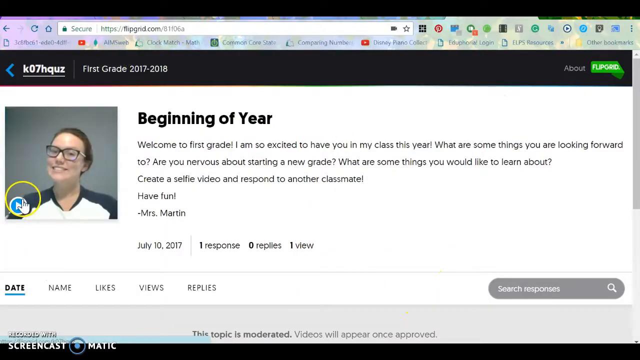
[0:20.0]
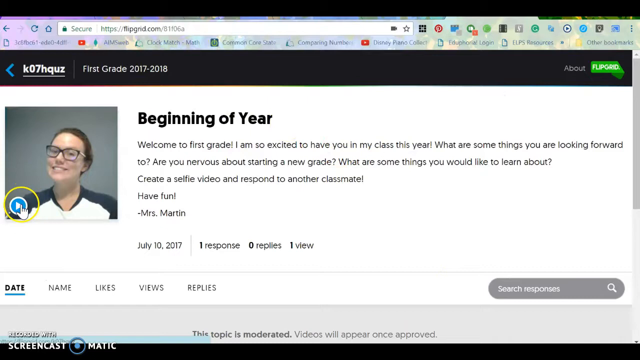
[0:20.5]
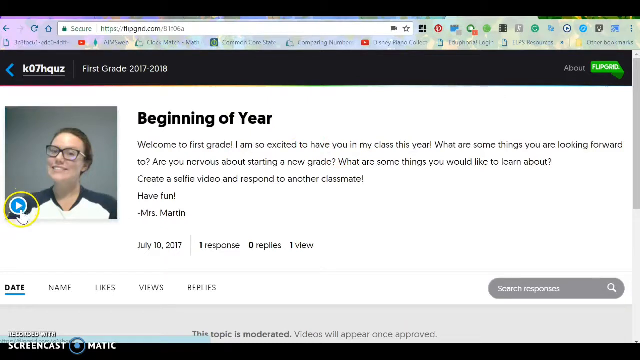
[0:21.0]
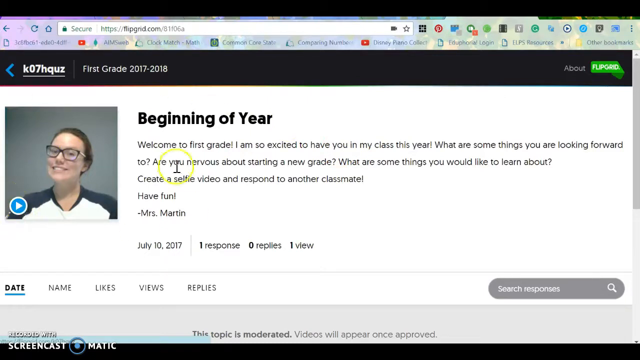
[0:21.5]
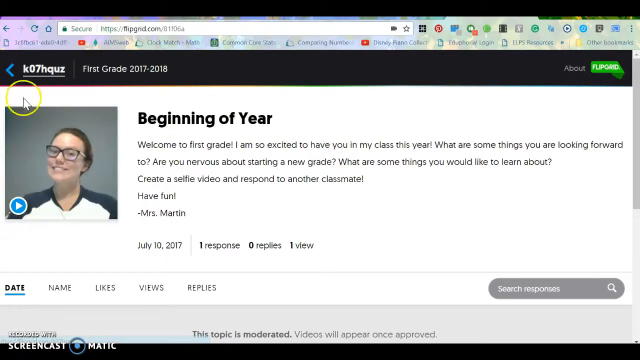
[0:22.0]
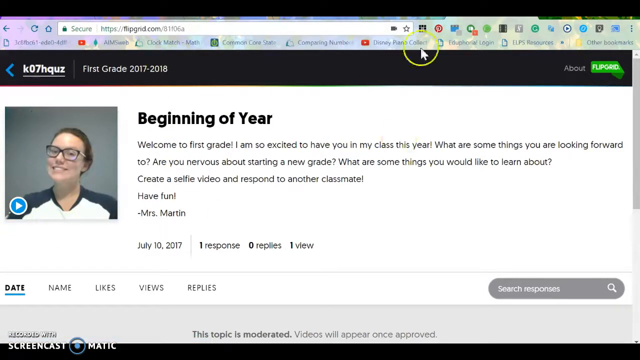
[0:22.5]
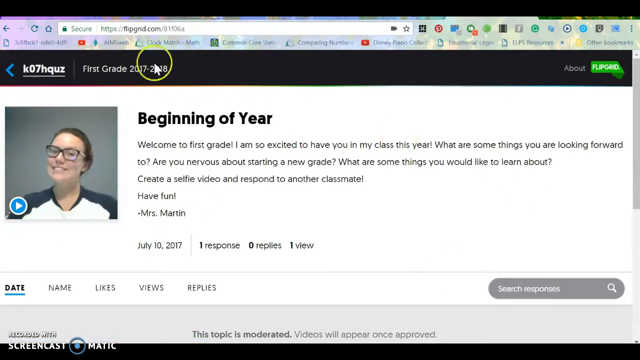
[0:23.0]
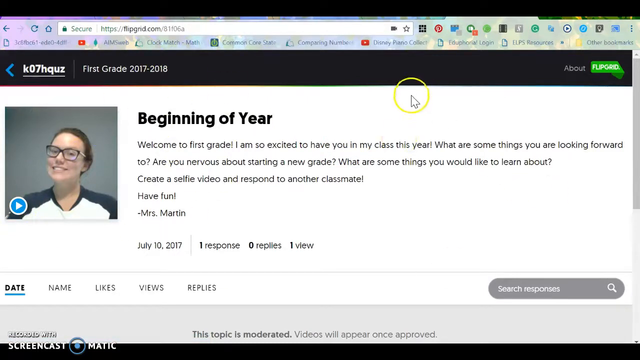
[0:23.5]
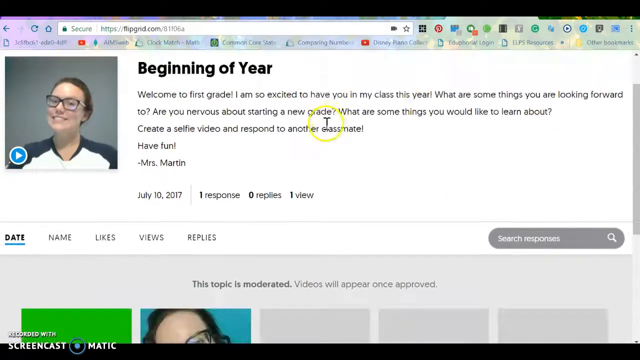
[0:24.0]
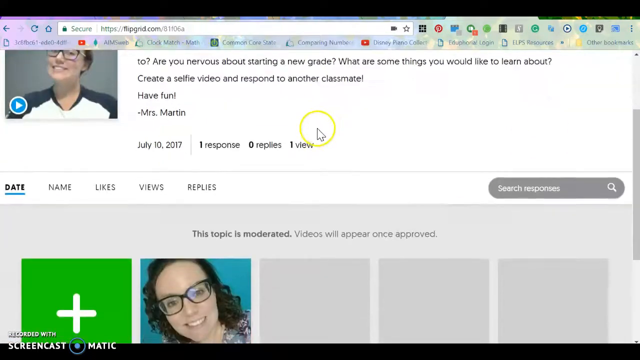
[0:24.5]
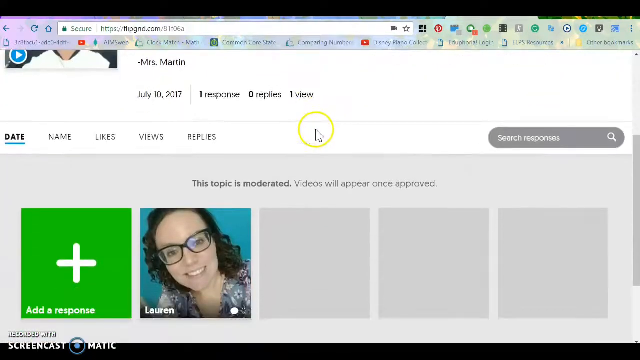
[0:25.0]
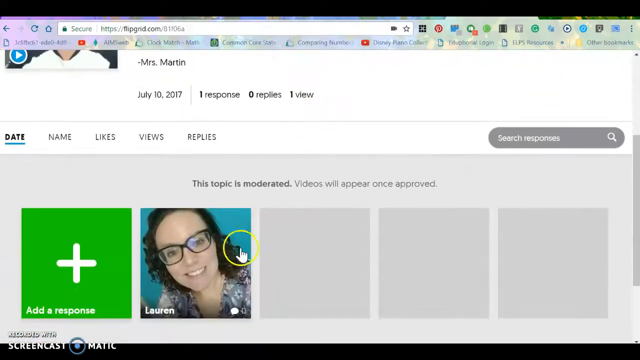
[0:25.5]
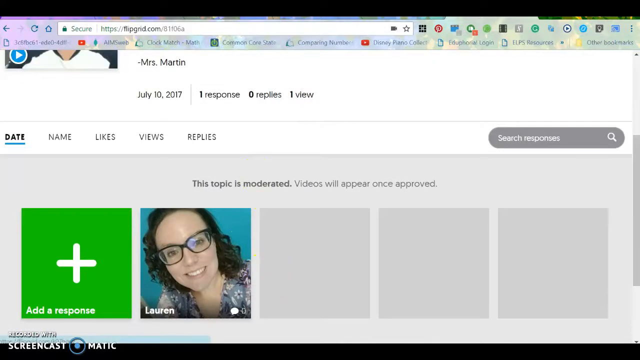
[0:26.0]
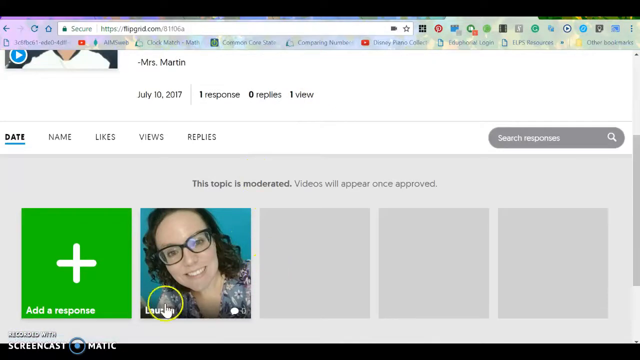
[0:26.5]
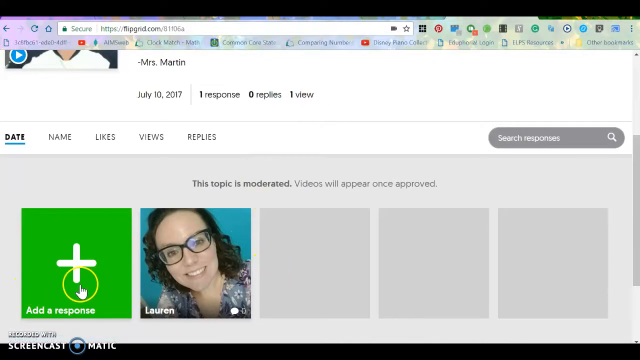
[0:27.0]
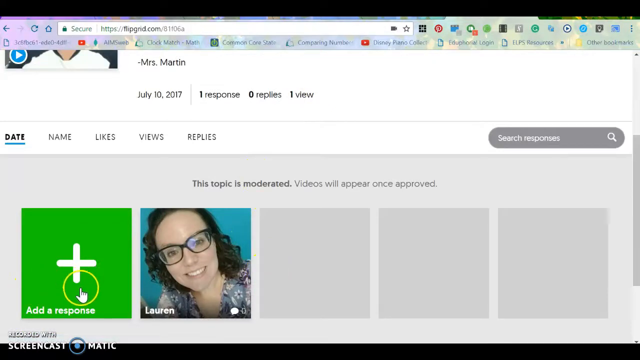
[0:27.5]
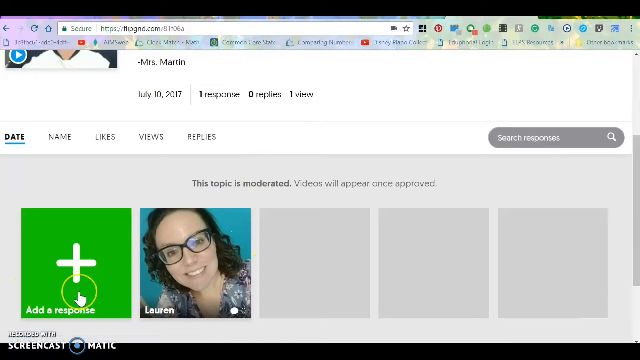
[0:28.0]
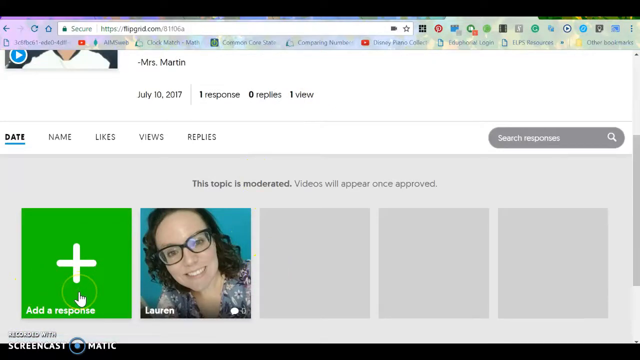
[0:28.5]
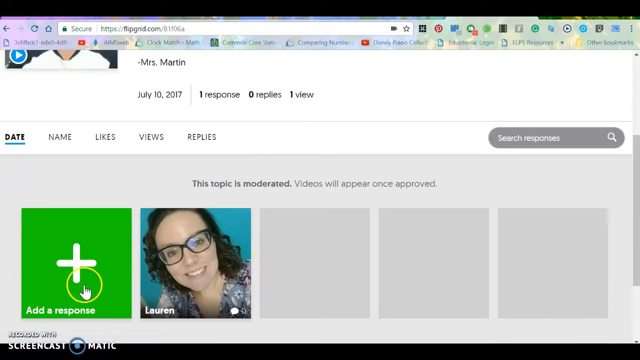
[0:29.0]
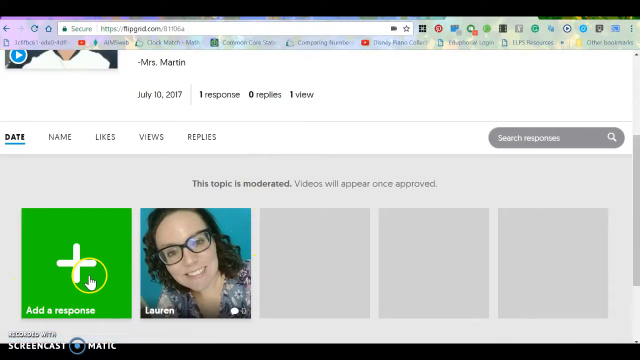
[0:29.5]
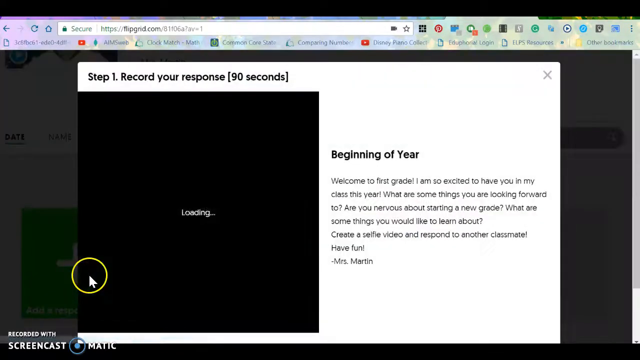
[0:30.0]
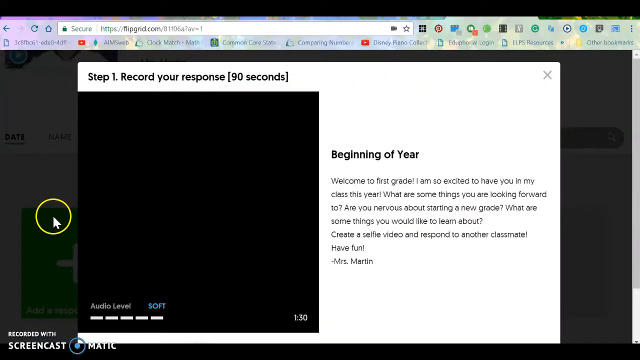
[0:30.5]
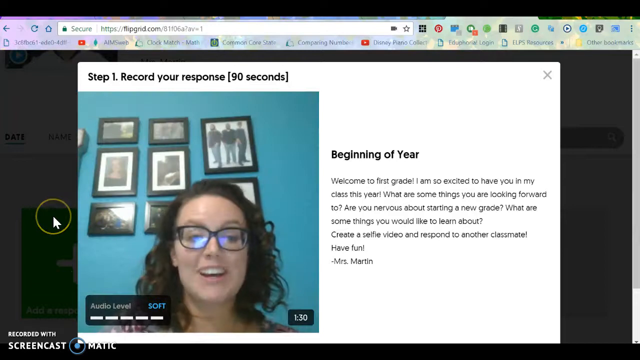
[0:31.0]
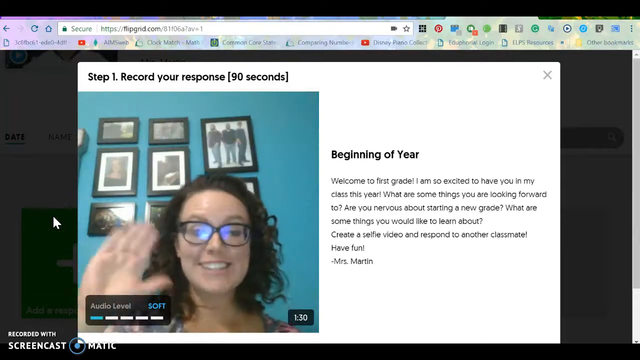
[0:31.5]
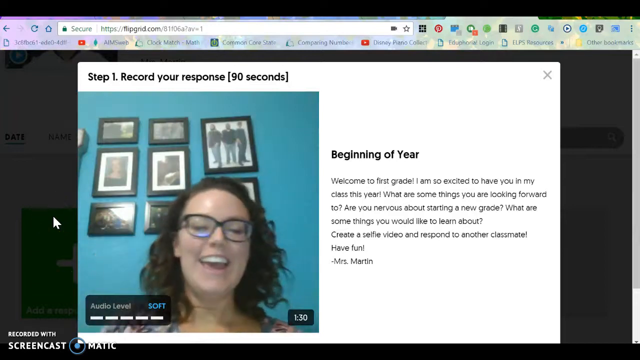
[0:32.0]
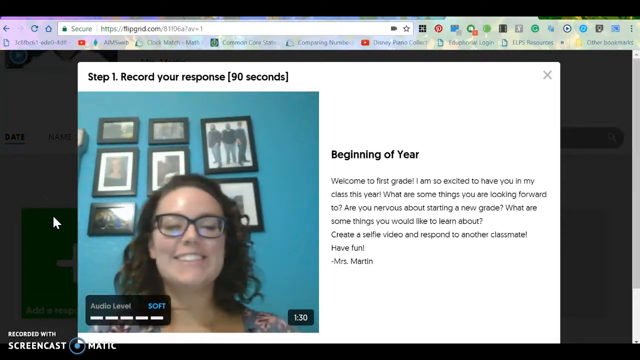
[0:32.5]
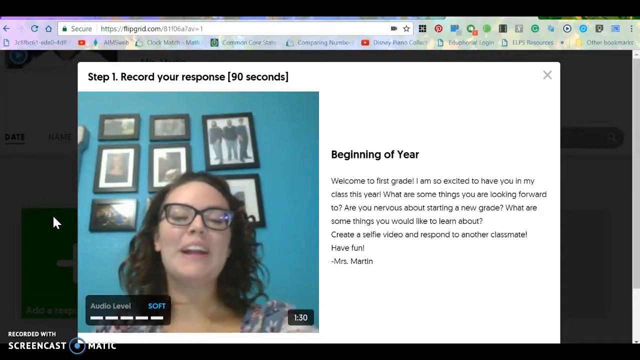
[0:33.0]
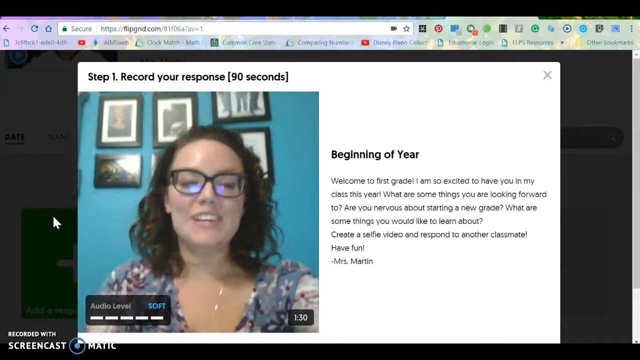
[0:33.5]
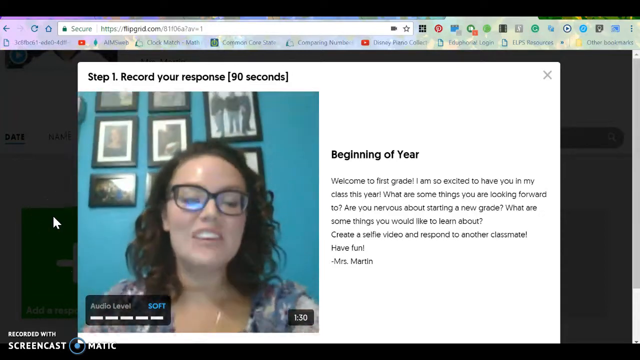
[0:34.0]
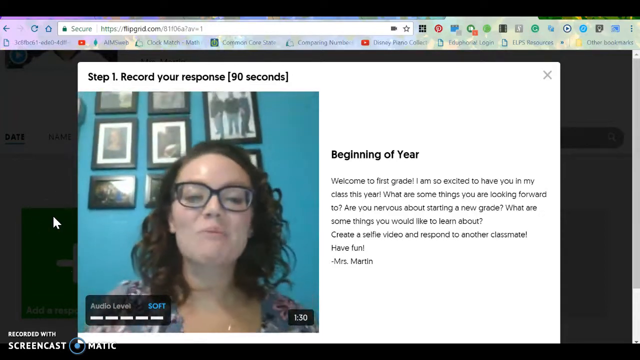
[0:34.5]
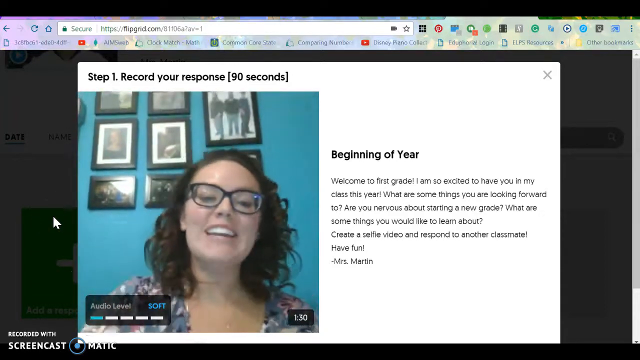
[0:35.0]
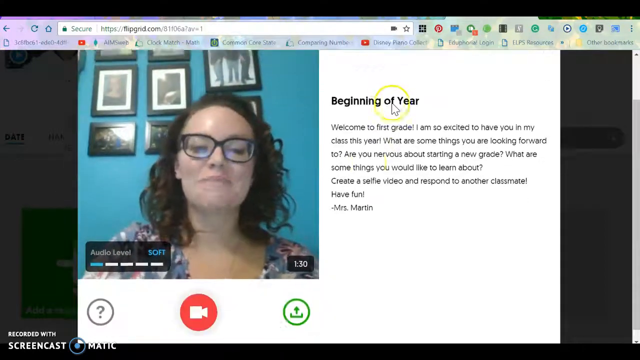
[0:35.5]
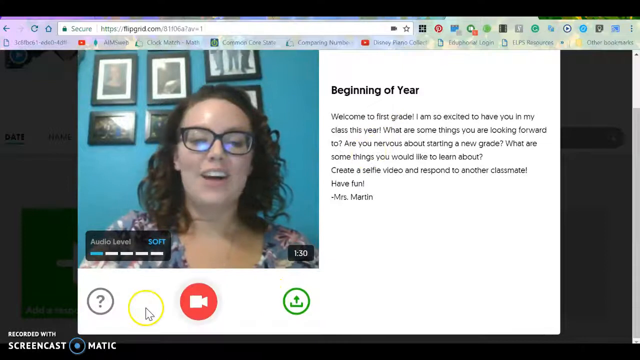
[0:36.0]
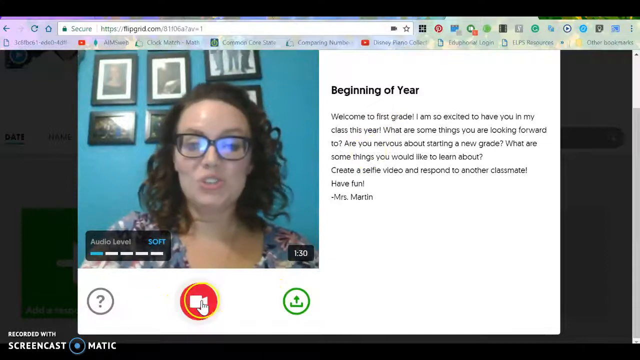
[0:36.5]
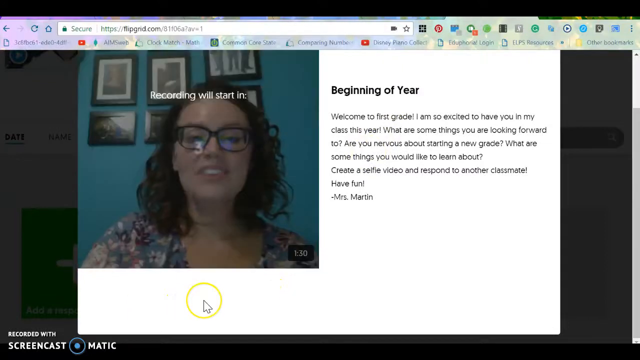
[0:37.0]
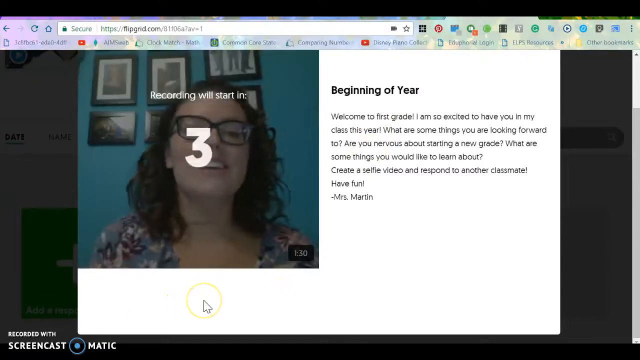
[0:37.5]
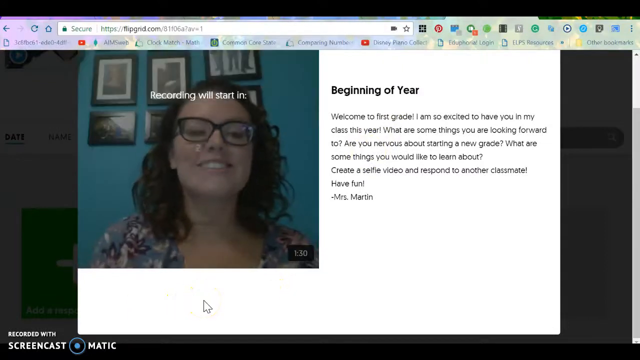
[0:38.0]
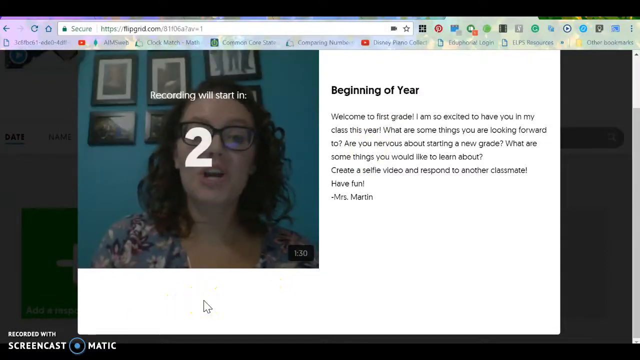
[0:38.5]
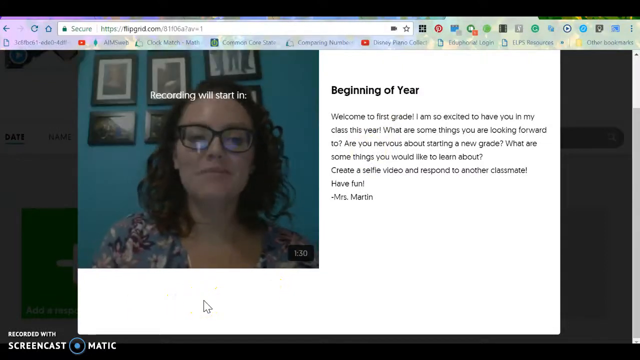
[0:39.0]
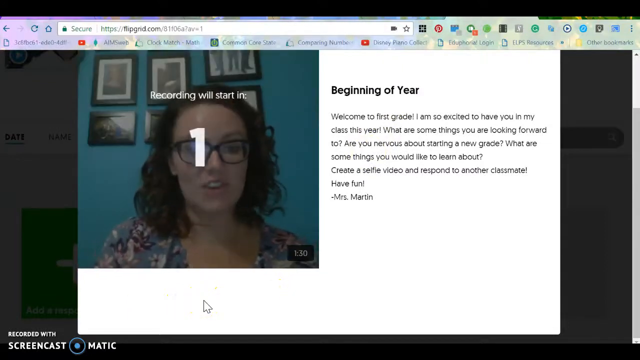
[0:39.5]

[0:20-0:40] The page still reads "welcome first grade I am excited to have you in my class," followed by "what are some things you are looking forward to," "are you nervous about studying in your grade," "what are some things you would like to learn about," "create a selfie video and respond" and "let's have fun," by Miss Matthew. It was posted on May 10, 2017, and a picture of Miss Lauren is shown. There is an option to add a response, with one view, one response and zero replies, and options for name, likes, views and replies. Pressing a green block with a white plus opens step one of the response, which is 90 seconds. Miss Lauren is shown giving a tutorial on how to respond, and a video icon can be clicked to record the response.